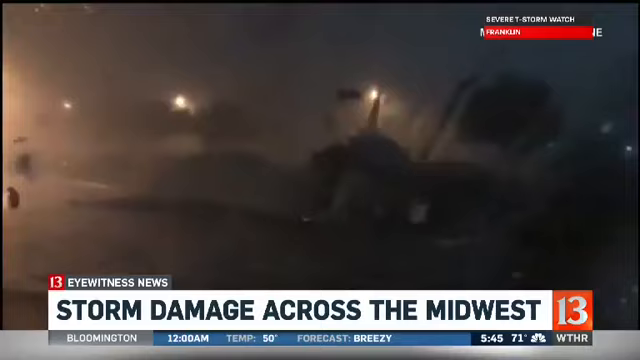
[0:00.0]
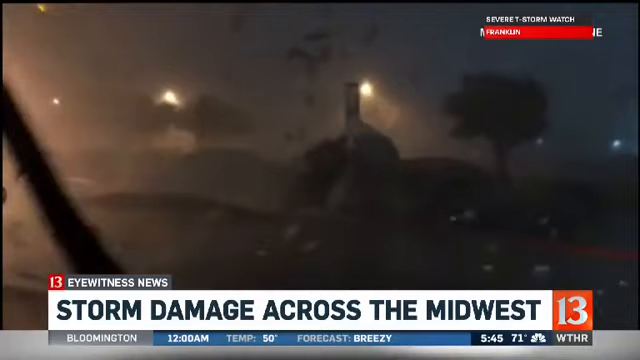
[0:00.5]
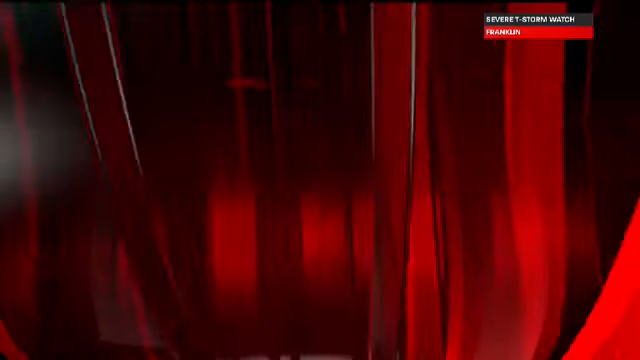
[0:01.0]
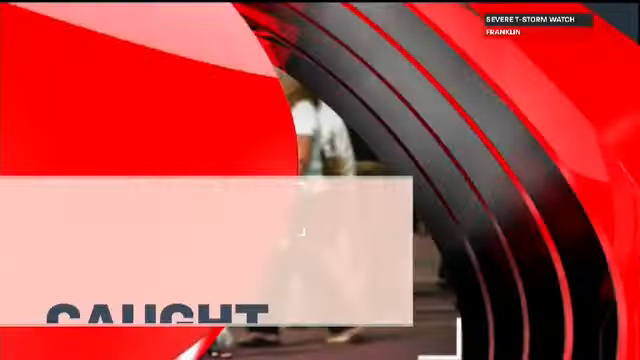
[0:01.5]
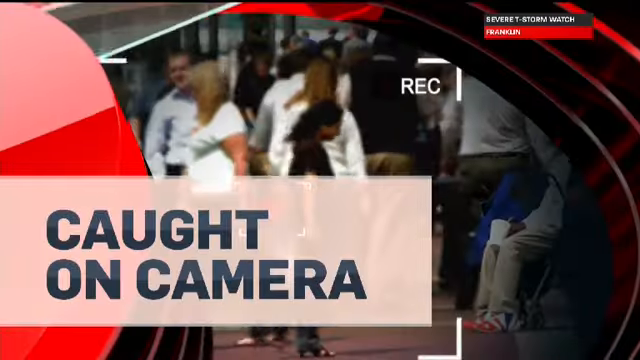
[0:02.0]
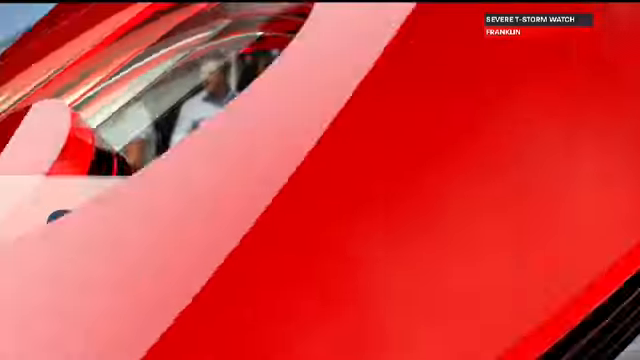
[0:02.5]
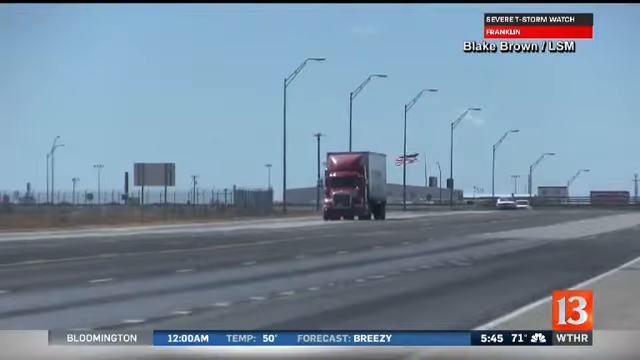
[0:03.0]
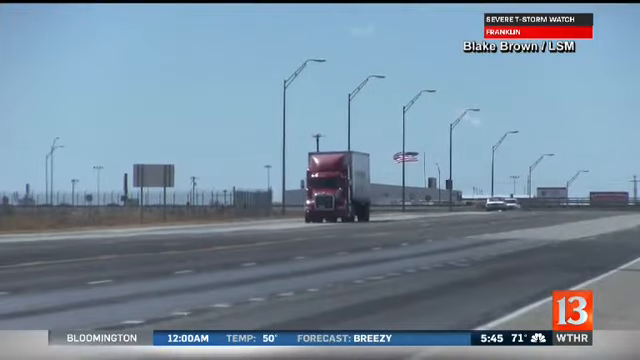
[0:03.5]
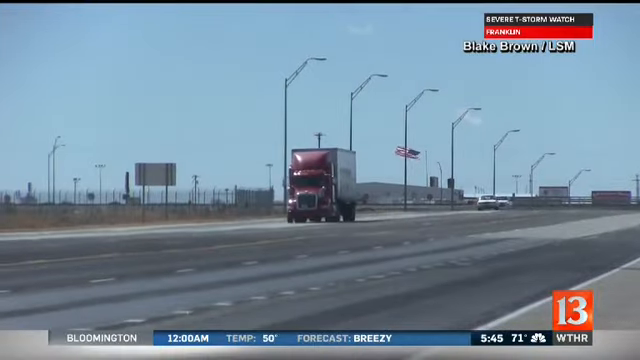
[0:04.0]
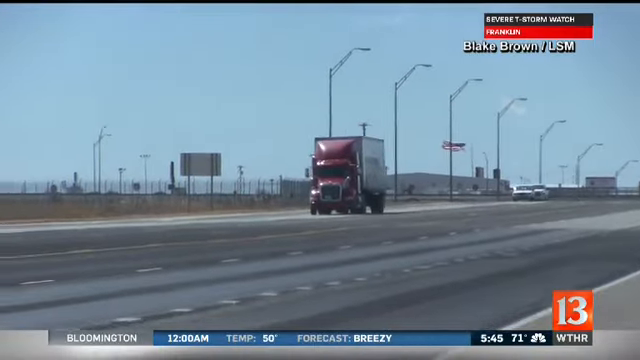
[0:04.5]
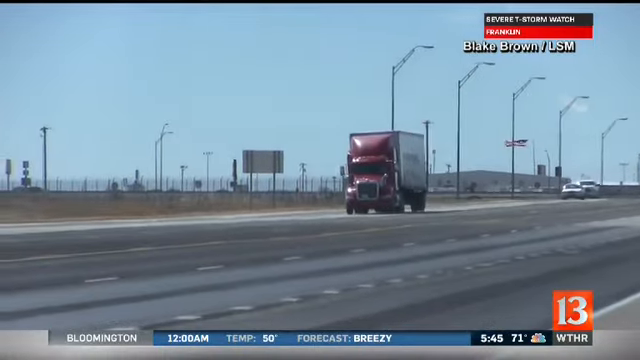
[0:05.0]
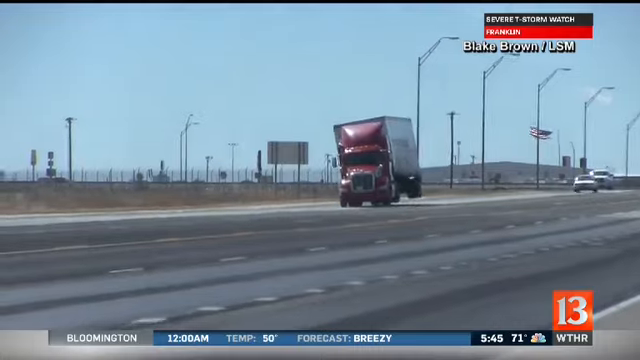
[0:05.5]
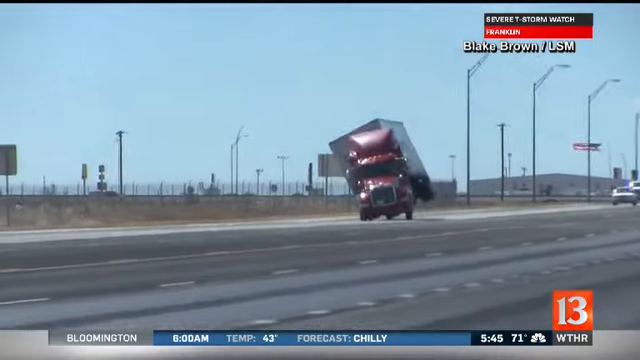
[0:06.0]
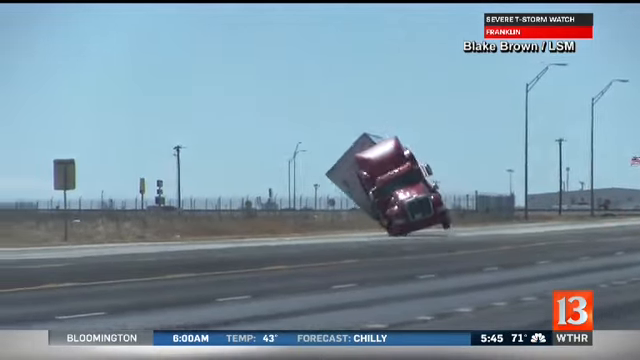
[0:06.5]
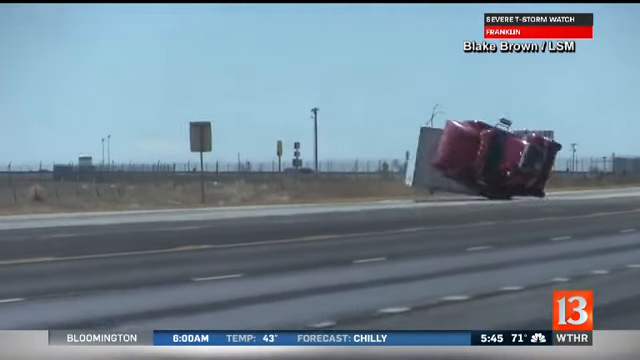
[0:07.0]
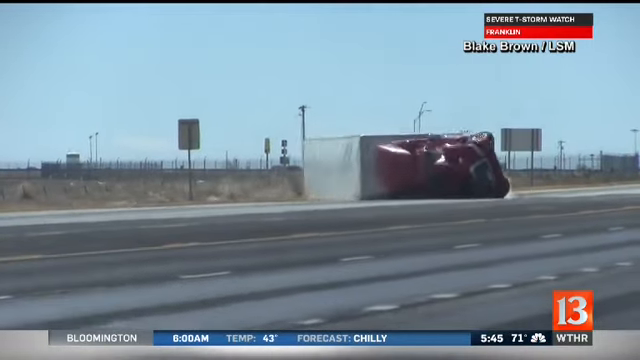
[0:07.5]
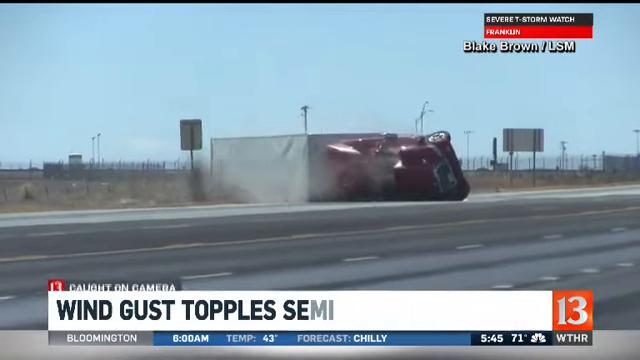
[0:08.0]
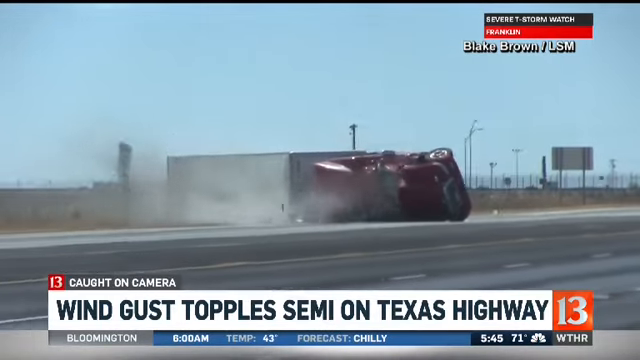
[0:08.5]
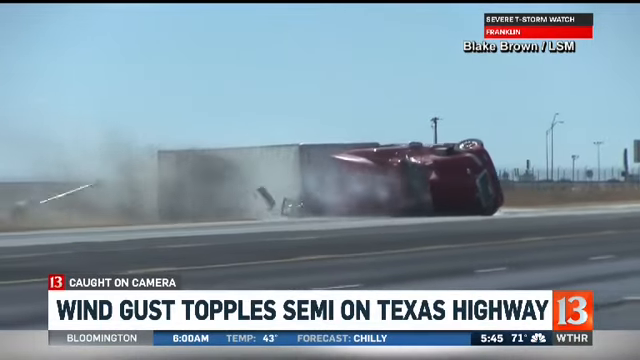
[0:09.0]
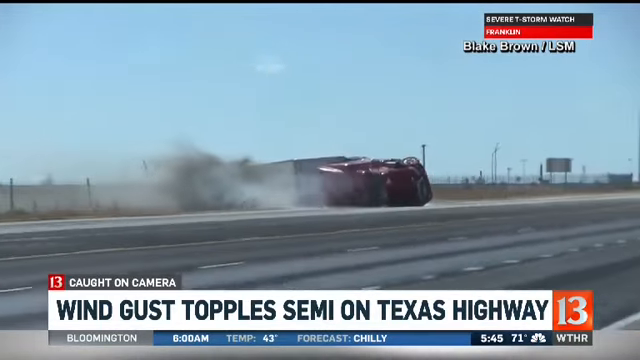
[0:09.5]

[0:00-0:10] A weather-style video shows storm damage across the Midwest, with a few different screens presented in a sort of weather format. The screen swaps to show a truck and trucker, with the truck kind of falling and rolling over as a wind gust topples a semi on a Texas highway. A detailed scene shows the semi, which is sort of red, driving down the road, being blown over by a giant gust of wind, and then sliding across the road. A kind of transitional screen appears, with no subjects really shown, before the semi crash is shown.